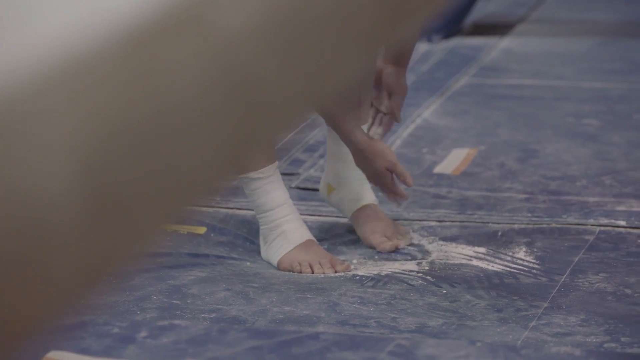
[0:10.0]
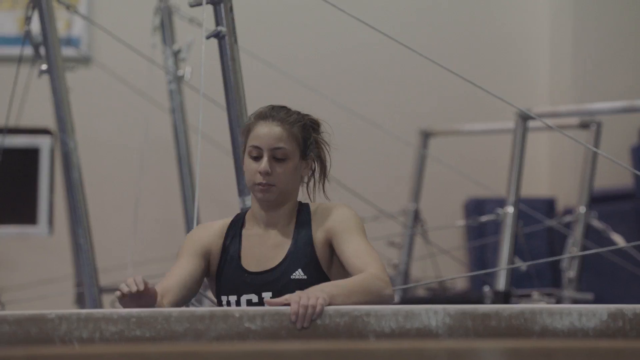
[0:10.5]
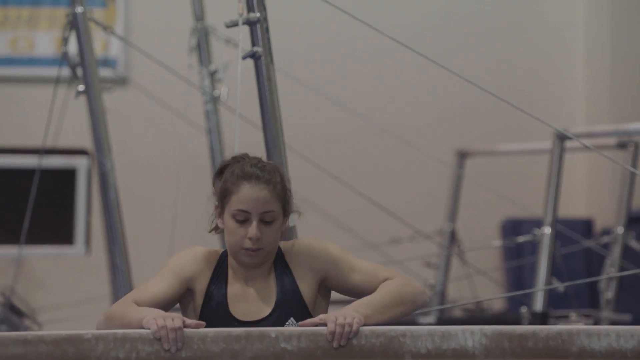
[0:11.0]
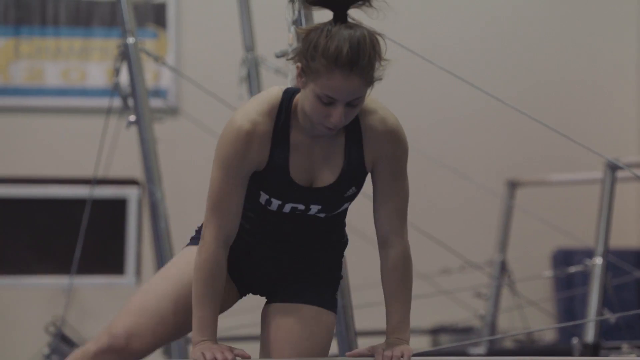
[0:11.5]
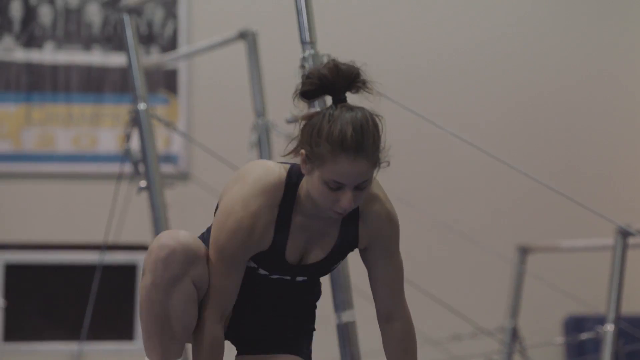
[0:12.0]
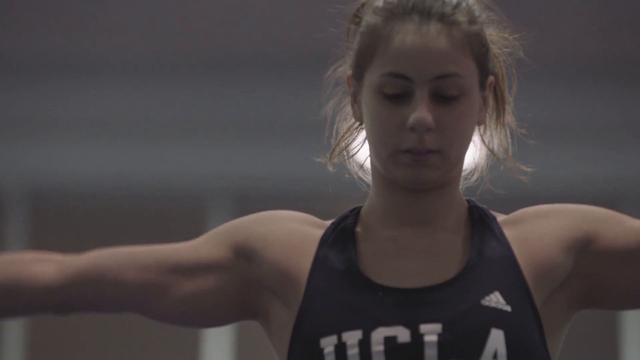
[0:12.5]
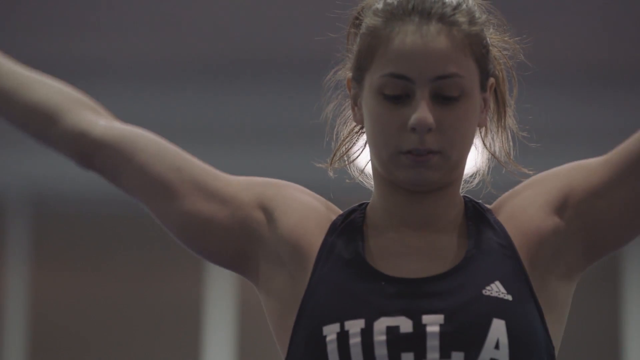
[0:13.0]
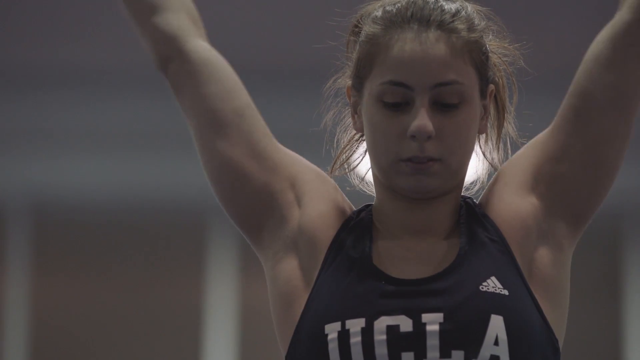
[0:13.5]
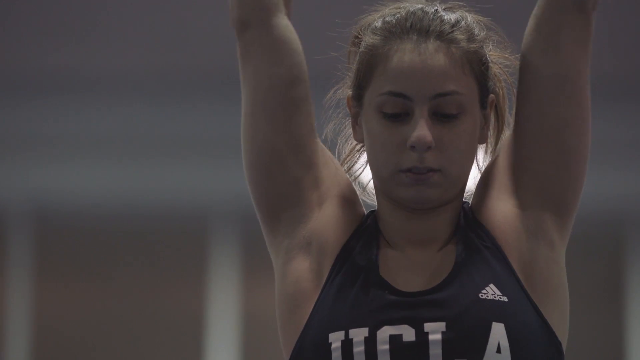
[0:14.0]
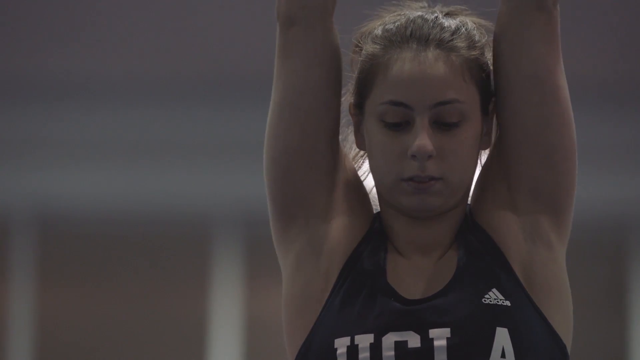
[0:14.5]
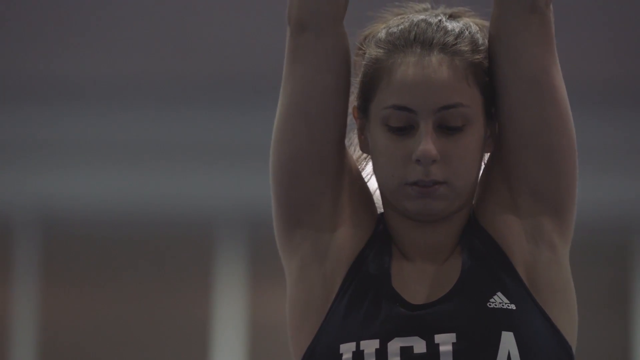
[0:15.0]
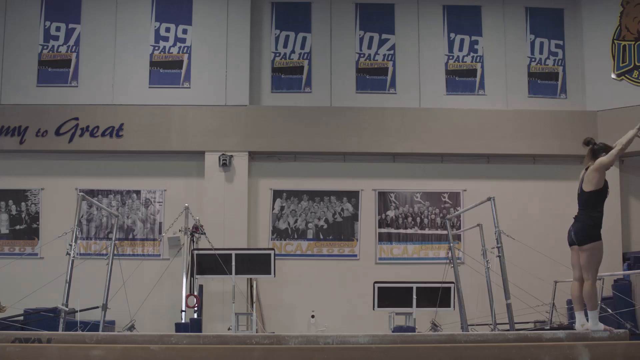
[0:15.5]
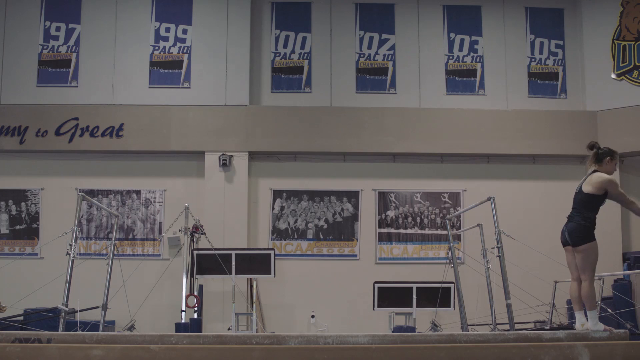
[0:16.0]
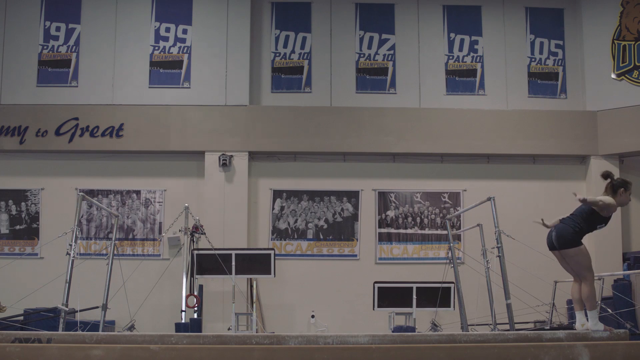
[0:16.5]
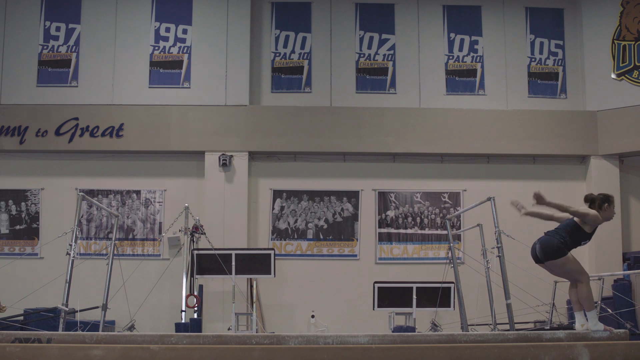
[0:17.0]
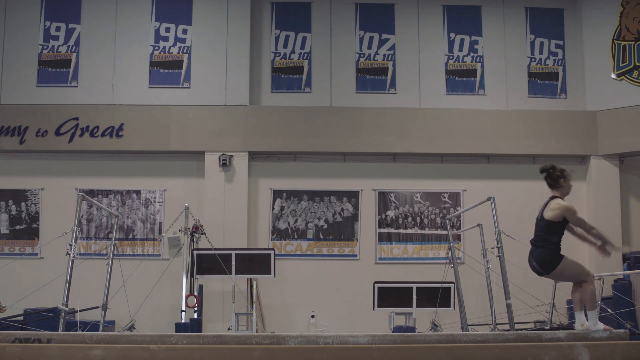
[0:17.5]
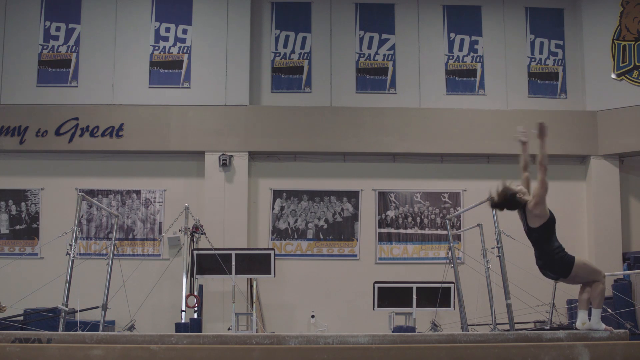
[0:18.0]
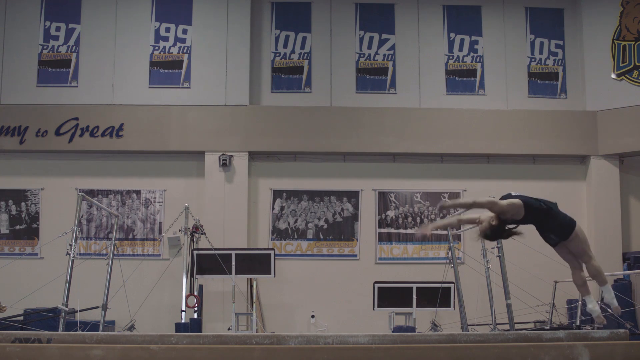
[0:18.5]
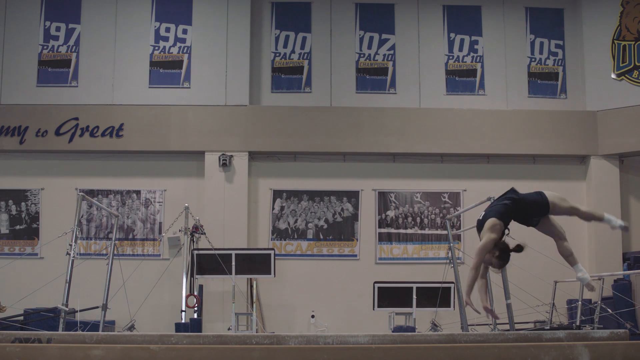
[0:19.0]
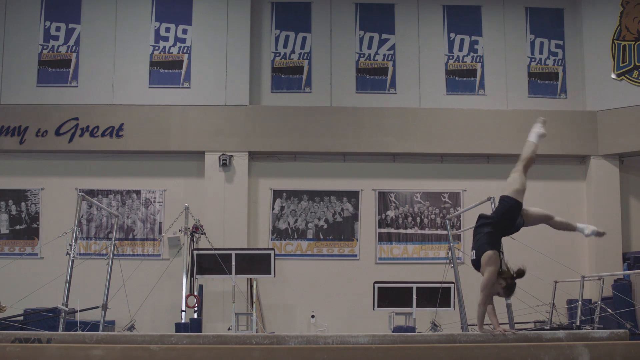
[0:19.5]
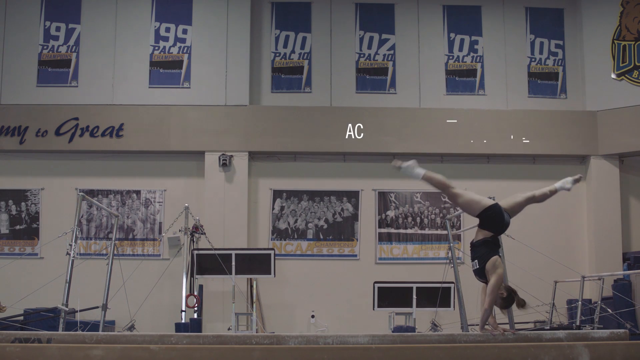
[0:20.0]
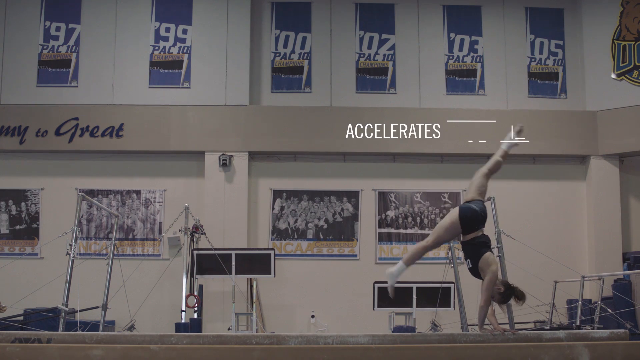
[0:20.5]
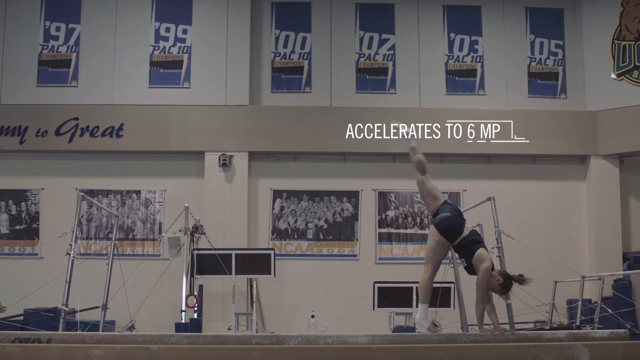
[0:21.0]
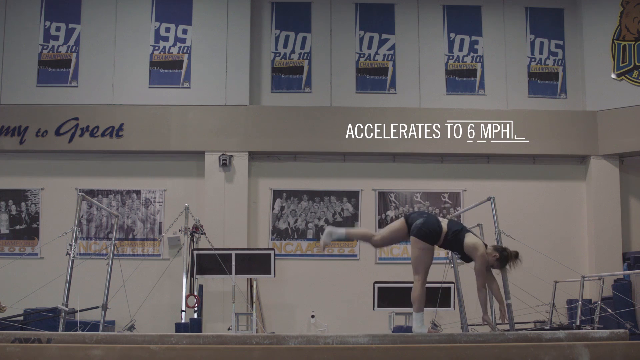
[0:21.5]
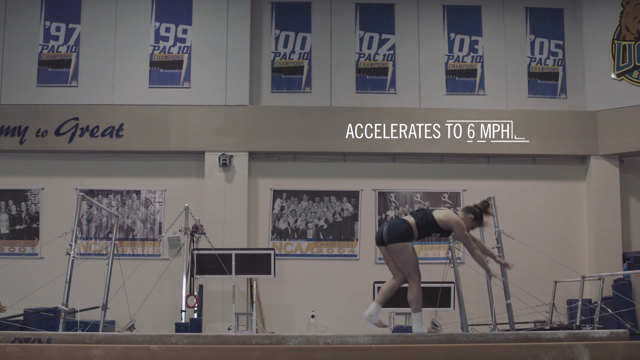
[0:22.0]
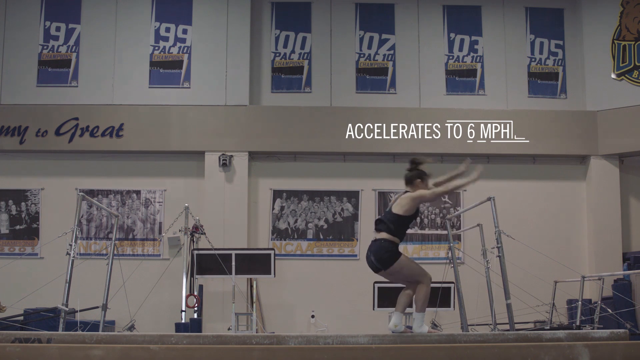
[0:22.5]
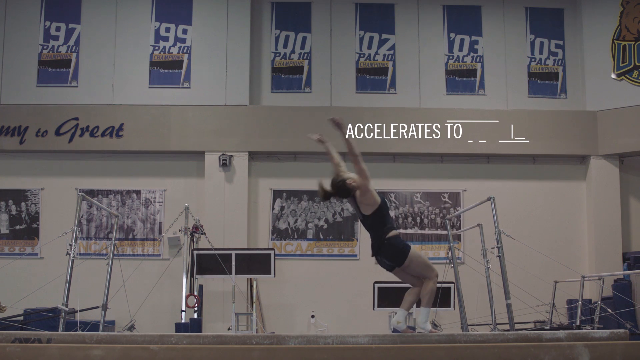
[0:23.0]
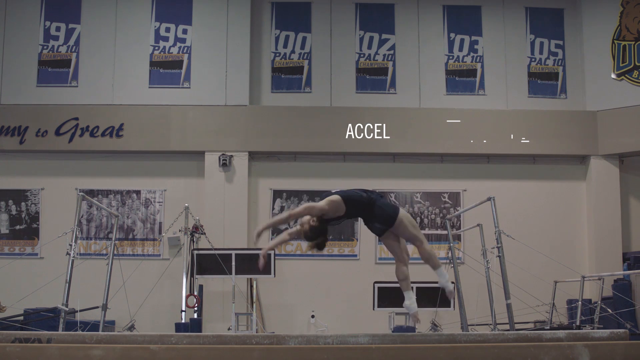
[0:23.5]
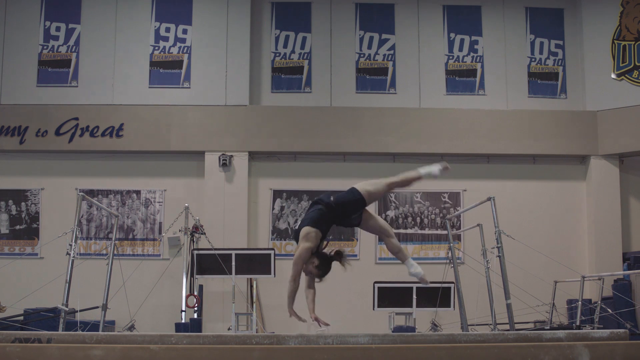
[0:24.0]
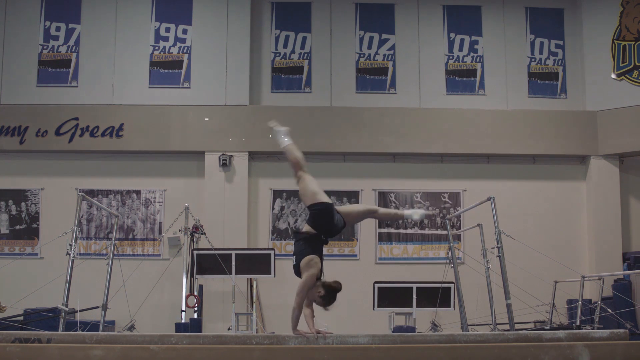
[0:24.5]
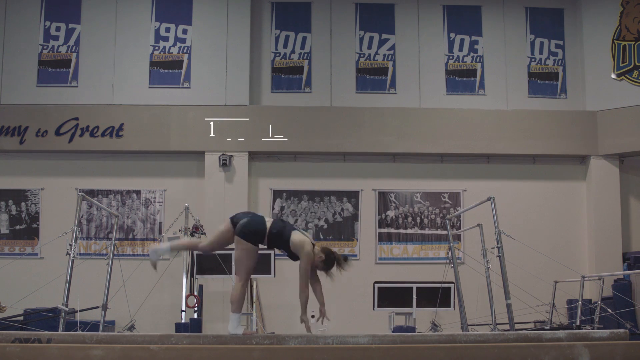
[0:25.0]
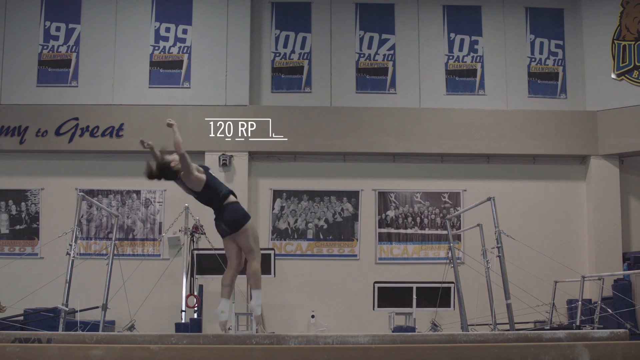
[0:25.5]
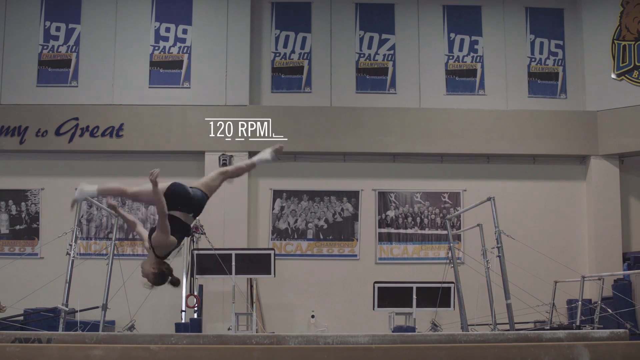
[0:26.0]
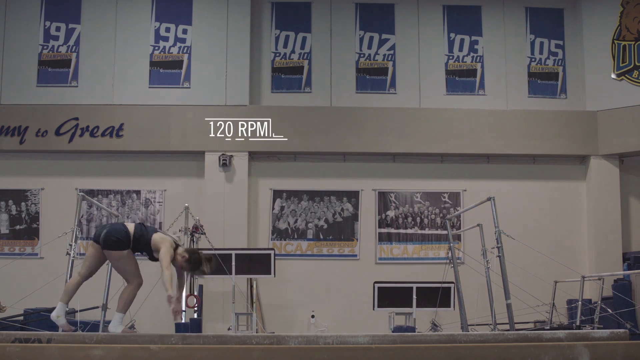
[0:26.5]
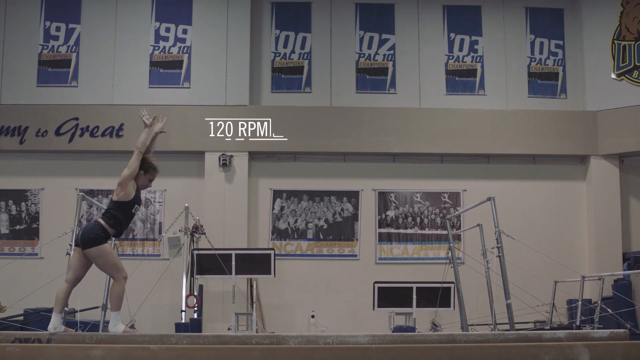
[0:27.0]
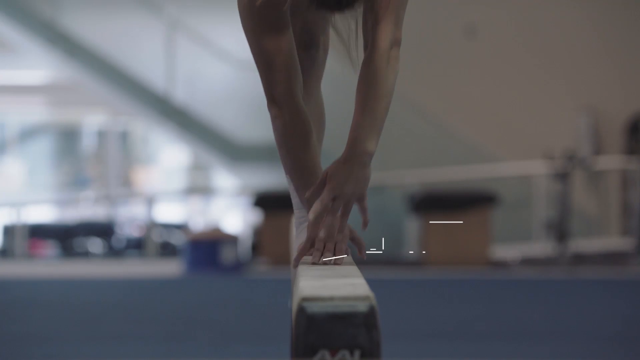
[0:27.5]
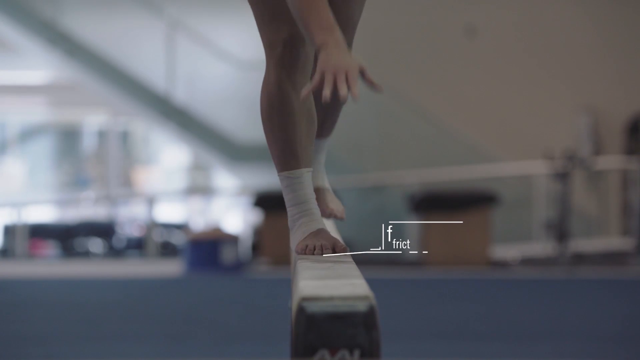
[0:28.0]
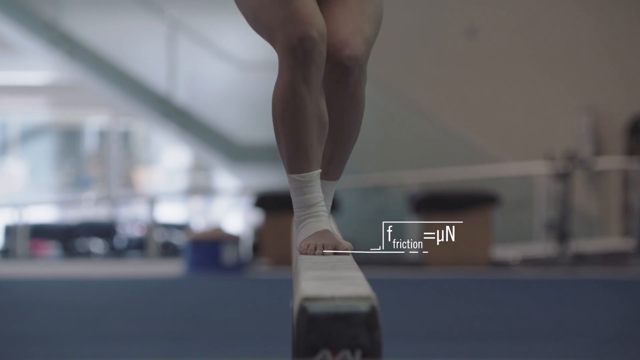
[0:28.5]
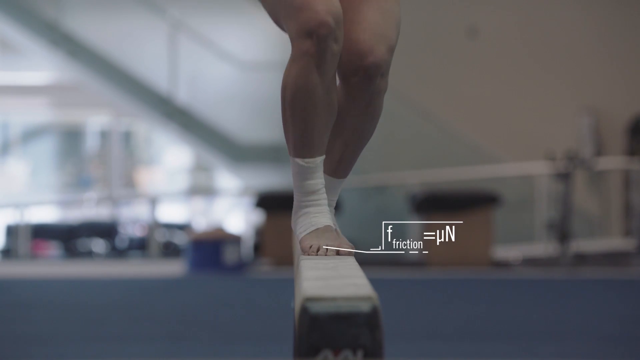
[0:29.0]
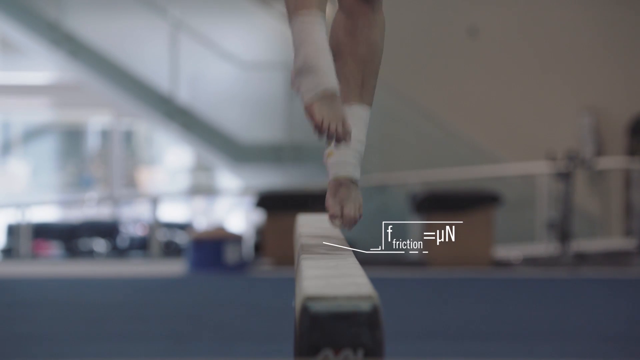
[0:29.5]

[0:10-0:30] She is bent over, apparently touching her ankle area, which is taped up, and there is a lot of chalk around her feet. She then pushes herself up onto an apparatus. A zoomed-in view shows her looking down slightly with both arms up in the air above her head. In slow motion, she begins a backflip on the apparatus, which looks to be a balance beam. Graphics appear, one reading "accelerates to six miles per hour." She does a second backflip and then a third flip, still in slow motion, while the graphics seem to show her miles per hour during the flips. The video then cuts back to her touching her feet and ankle area.